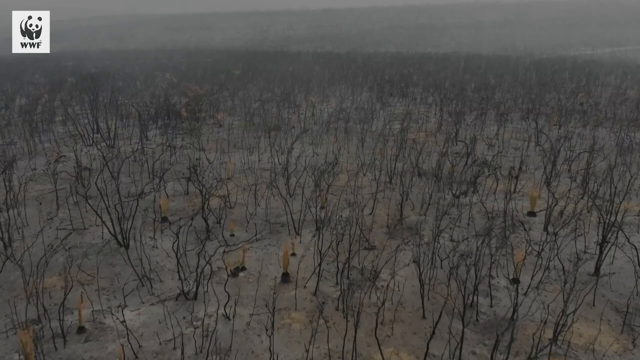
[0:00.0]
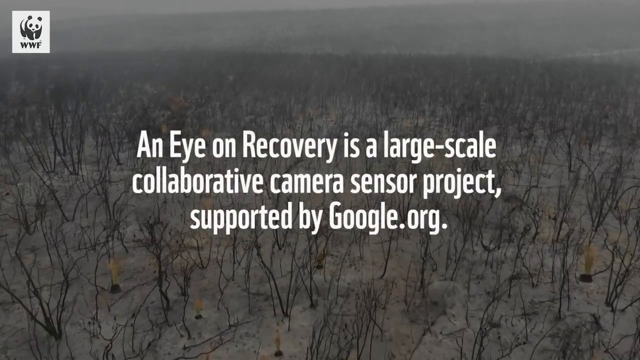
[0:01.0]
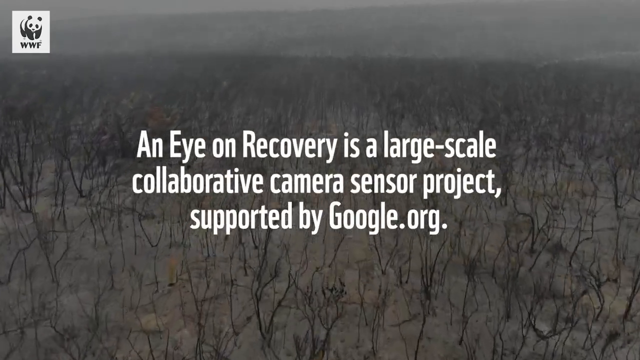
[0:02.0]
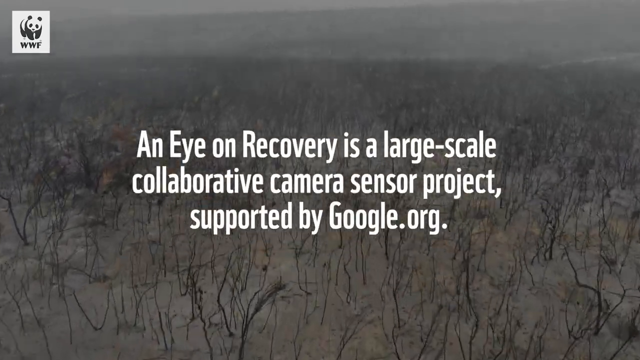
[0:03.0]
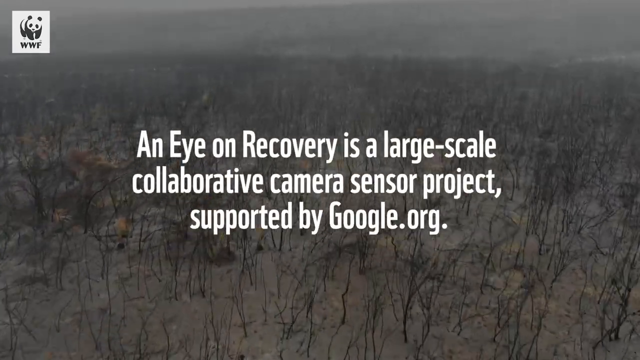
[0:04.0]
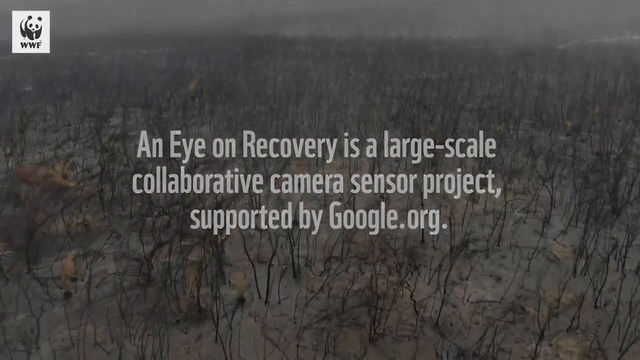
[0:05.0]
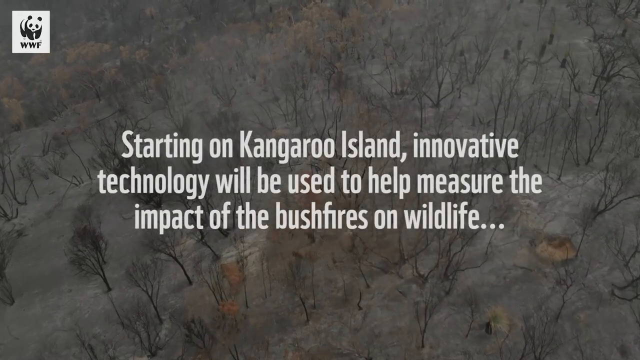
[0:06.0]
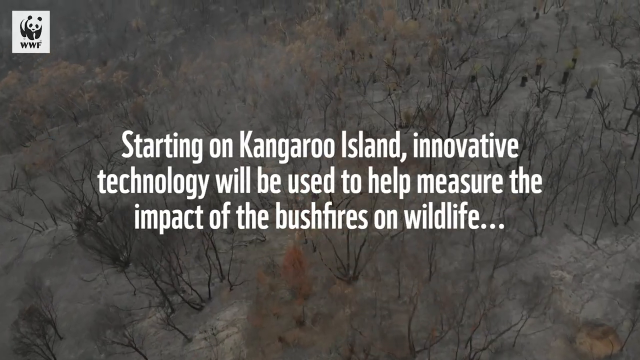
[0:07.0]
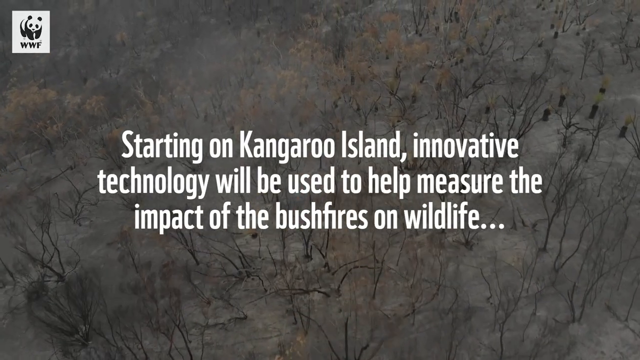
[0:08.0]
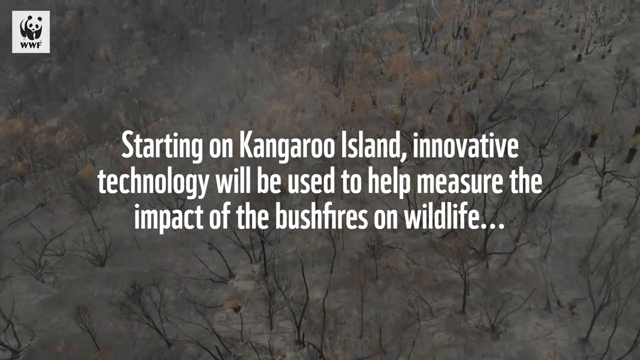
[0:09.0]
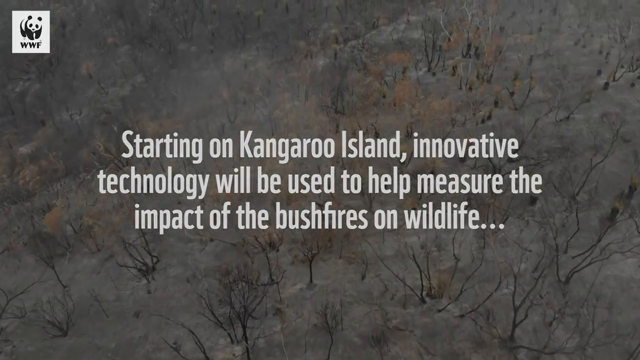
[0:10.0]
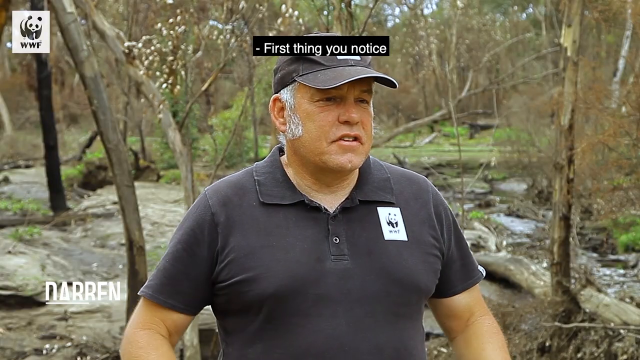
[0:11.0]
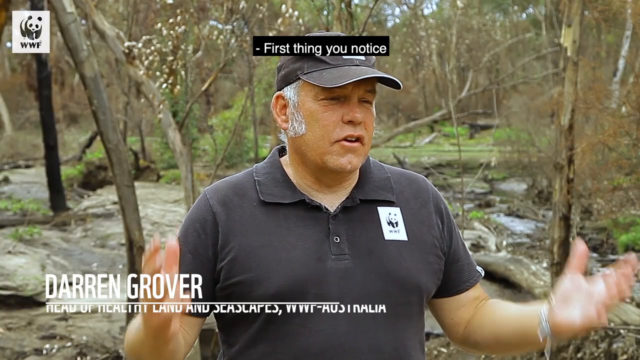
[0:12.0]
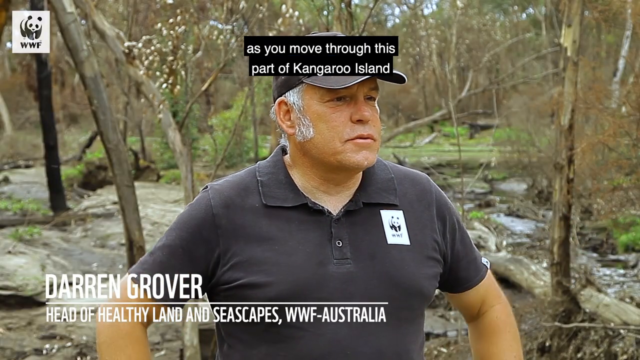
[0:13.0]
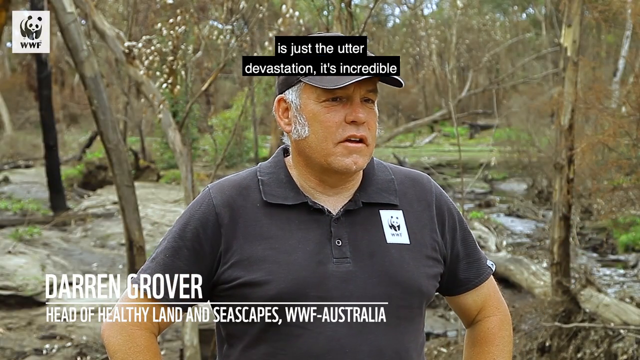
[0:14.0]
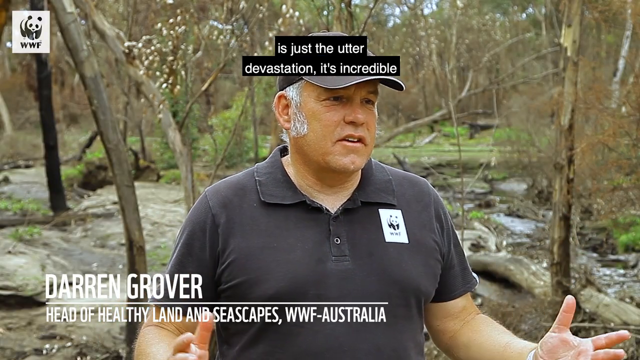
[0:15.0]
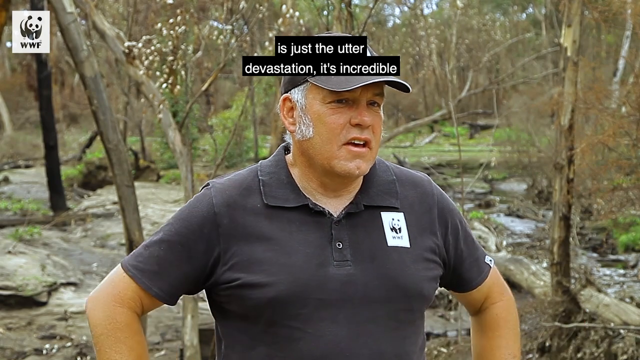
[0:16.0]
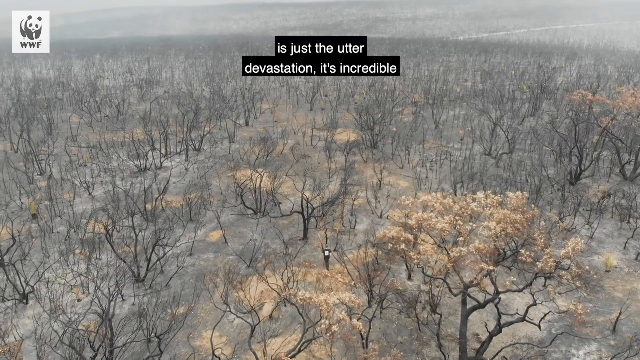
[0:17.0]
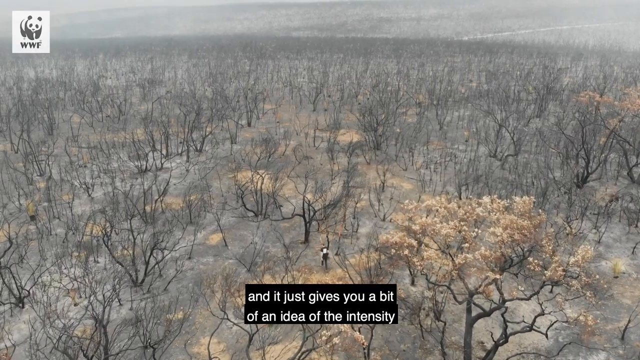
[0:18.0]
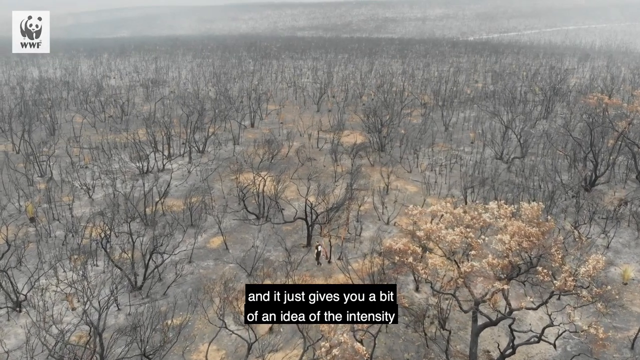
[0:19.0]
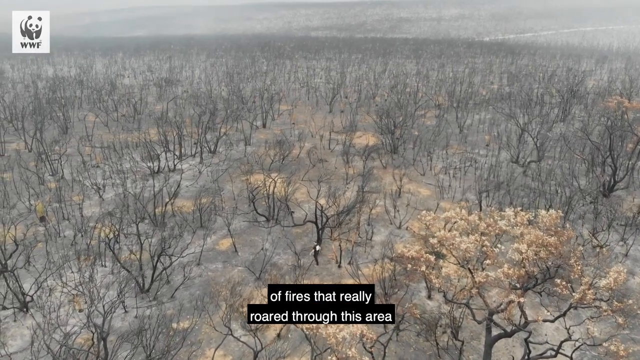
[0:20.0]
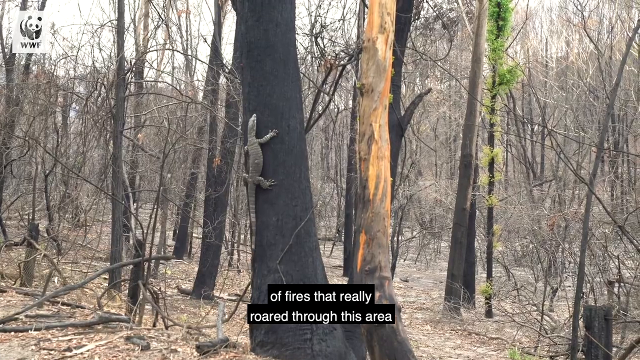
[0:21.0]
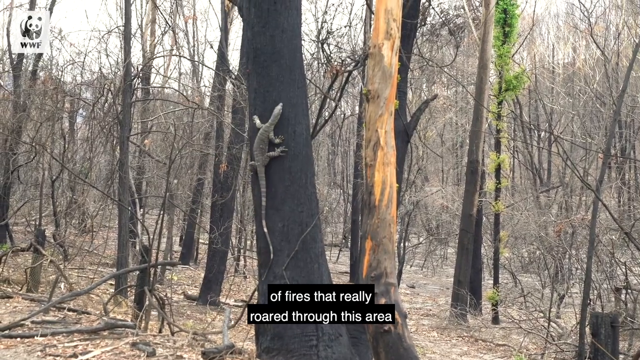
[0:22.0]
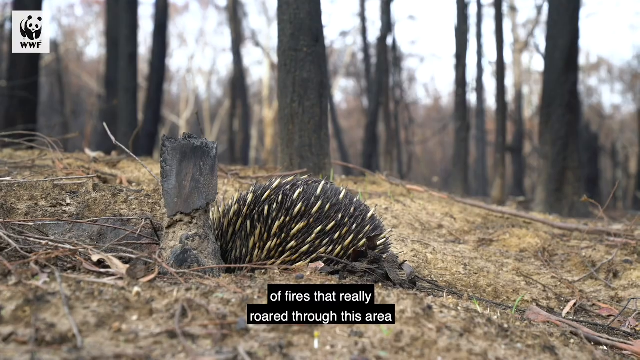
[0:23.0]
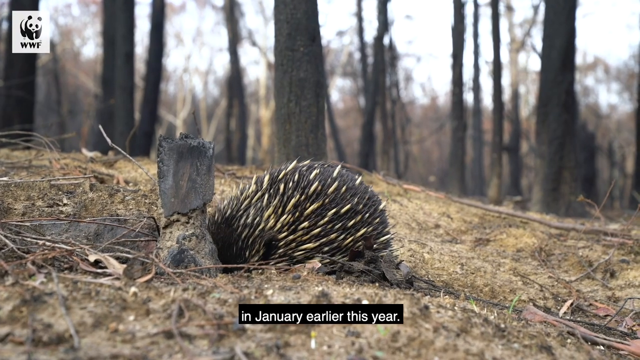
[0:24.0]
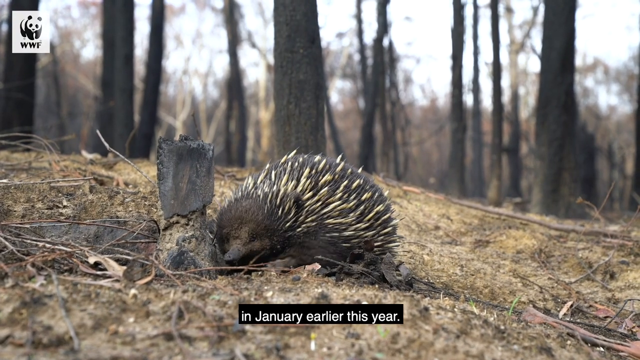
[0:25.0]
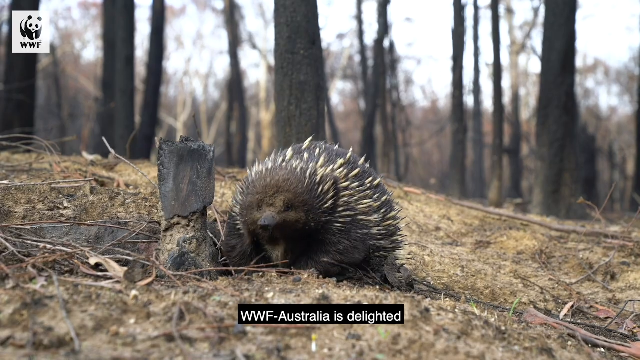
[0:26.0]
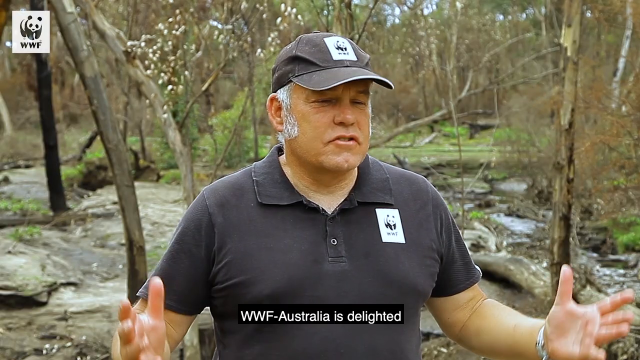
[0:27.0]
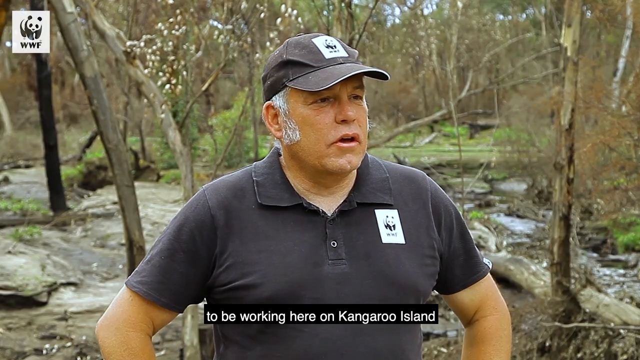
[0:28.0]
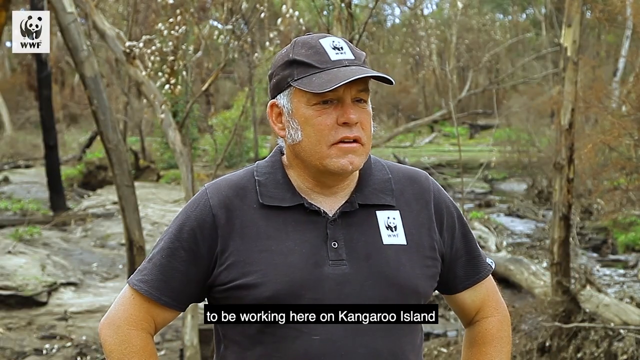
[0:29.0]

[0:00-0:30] A gray, foggy wilderness opens the video. Many small bare twigs grow out of the ground, which appears somewhat wet or swampy. The camera moves forward through the wilderness at roughly a person's height from the ground. Text in the center reads "an eye on recovery. Collaborative camera sensor project supported by google.org." The camera moves forward and angles down slightly, and the view now appears to be overhead; the twigs seem to be larger trees, still very bare. The text in the center changes to "Starting on Kangaroo Island. Innovative technology will be used to help measure the impact of the bushfires on wildlife." The camera continues to move steadily forward. A cut shows a person standing in front of a forest, gesturing with both hands and speaking to the camera while looking off to the right. He wears a polo shirt with a World Wildlife Fund logo on his left chest. He appears to put both hands on his hips, though his body is not visible on camera. The view returns to the wilderness, where a person appears to be walking with their back to the camera in the lower part of the screen, past a large tree in the center. The shot zooms into a more grounded view showing wildlife, including a lizard climbing a tree and what appears to be a hedgehog burrowing a hole in the ground. The video then returns to the man speaking.